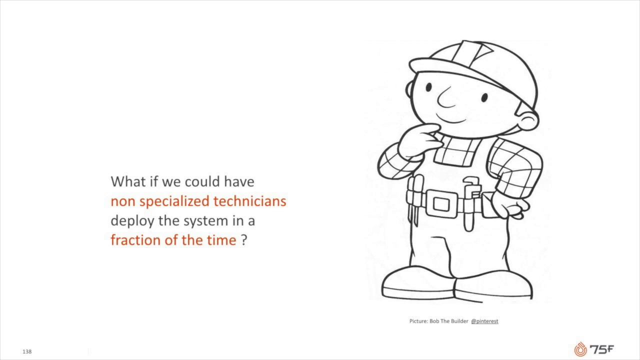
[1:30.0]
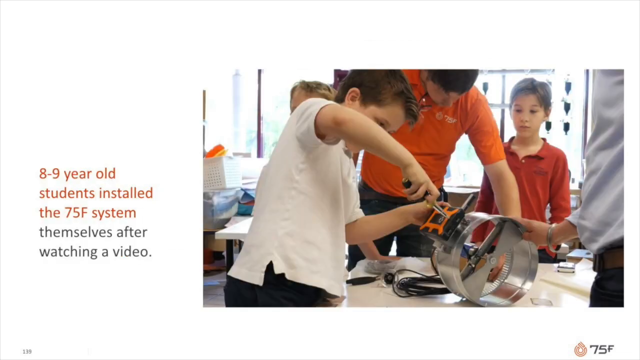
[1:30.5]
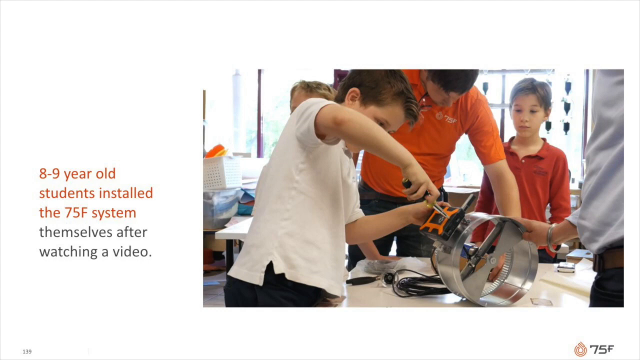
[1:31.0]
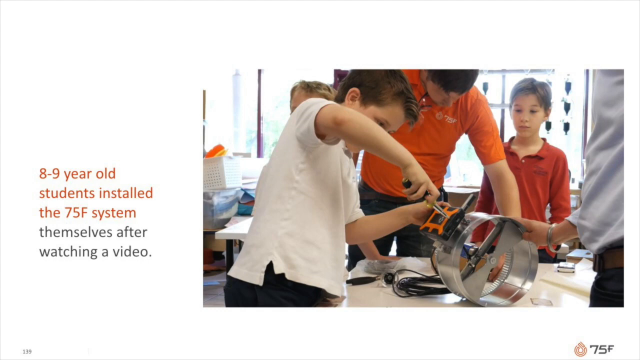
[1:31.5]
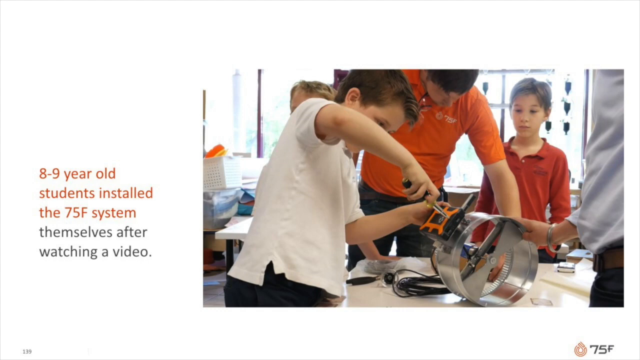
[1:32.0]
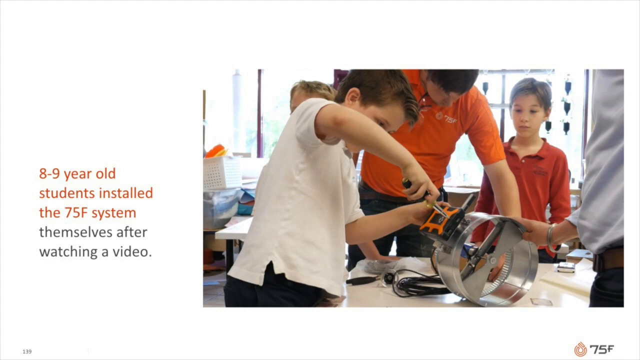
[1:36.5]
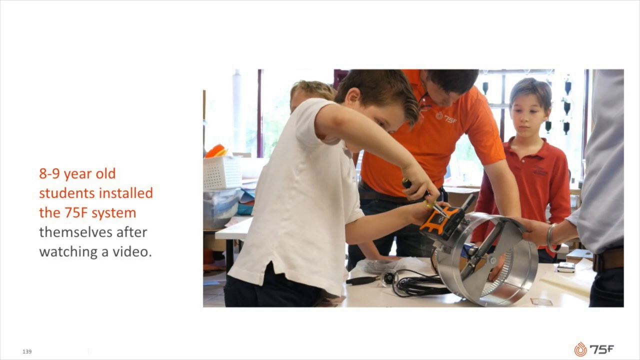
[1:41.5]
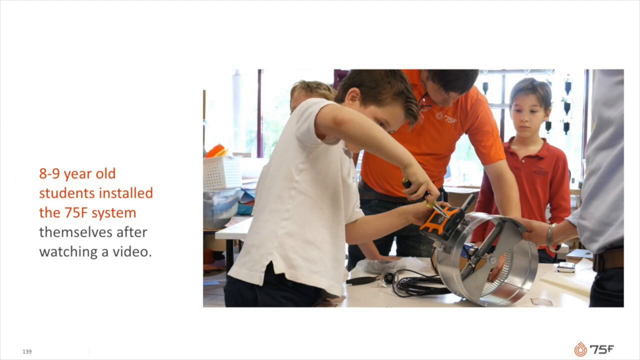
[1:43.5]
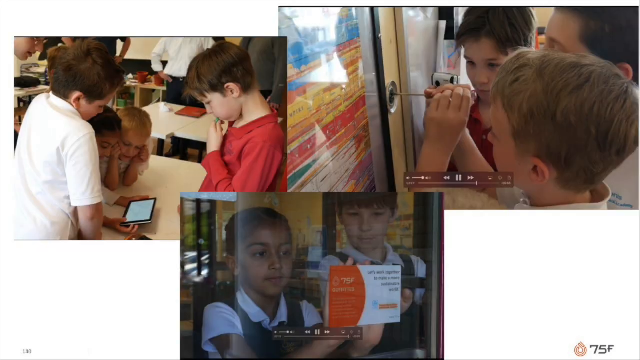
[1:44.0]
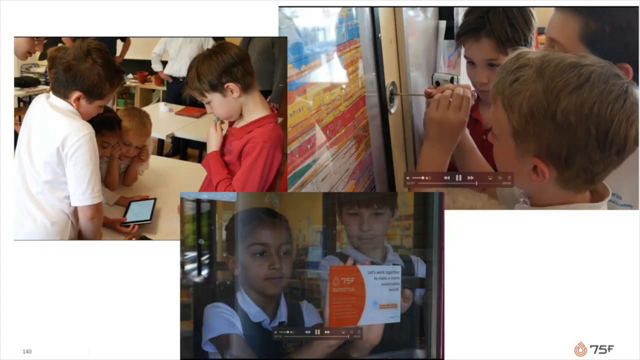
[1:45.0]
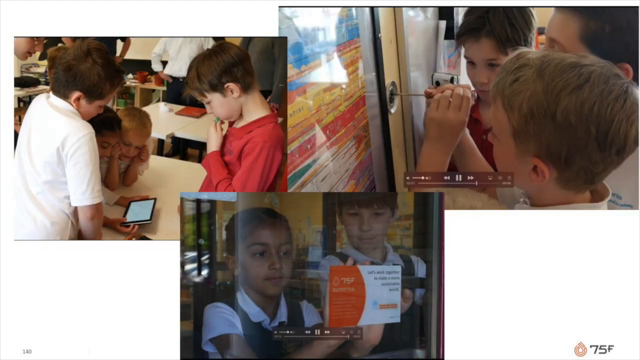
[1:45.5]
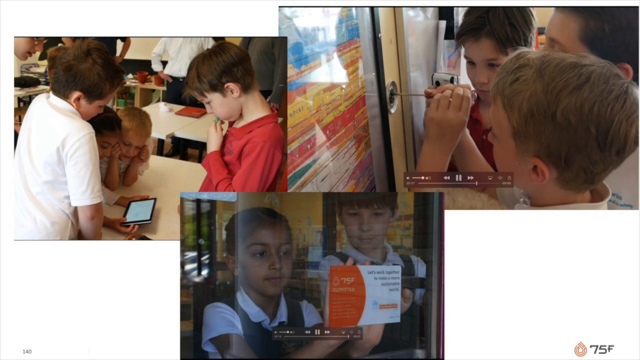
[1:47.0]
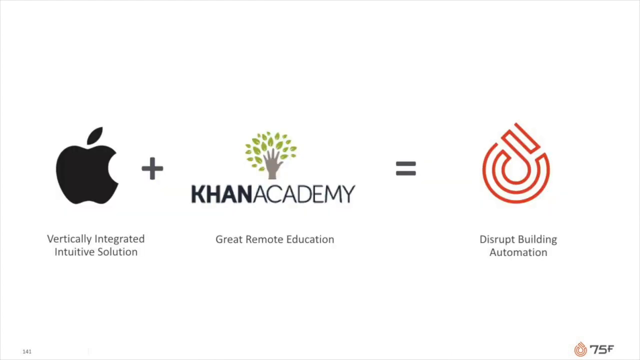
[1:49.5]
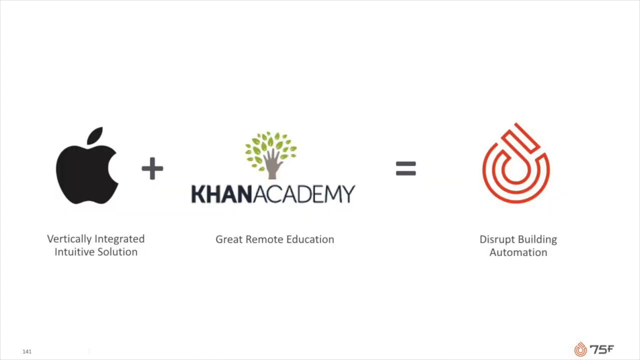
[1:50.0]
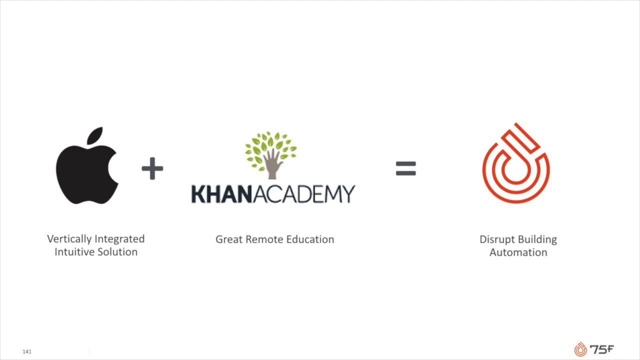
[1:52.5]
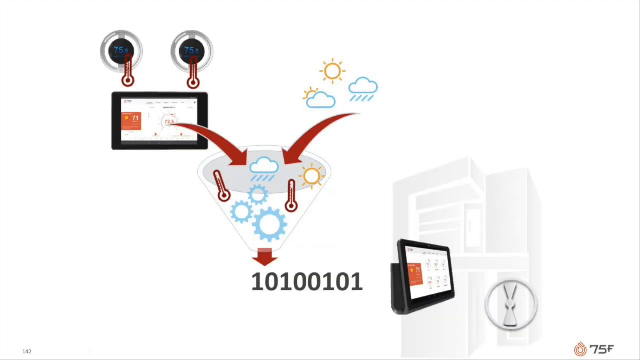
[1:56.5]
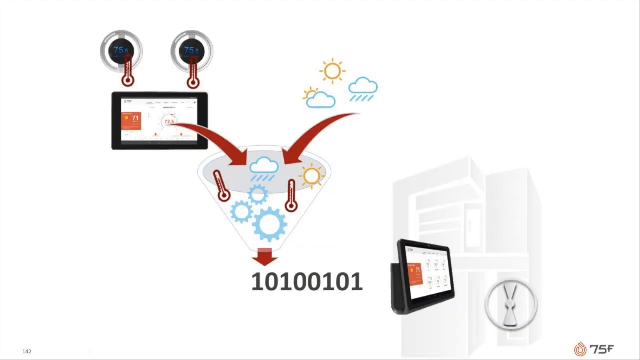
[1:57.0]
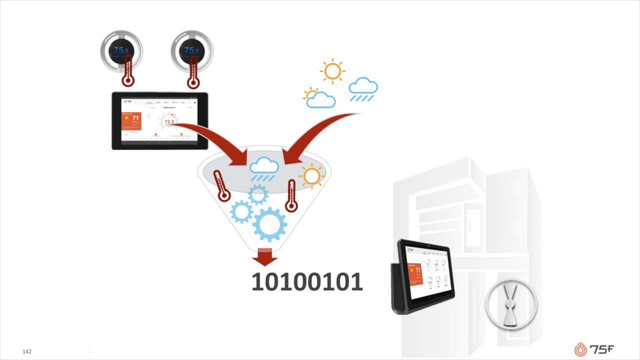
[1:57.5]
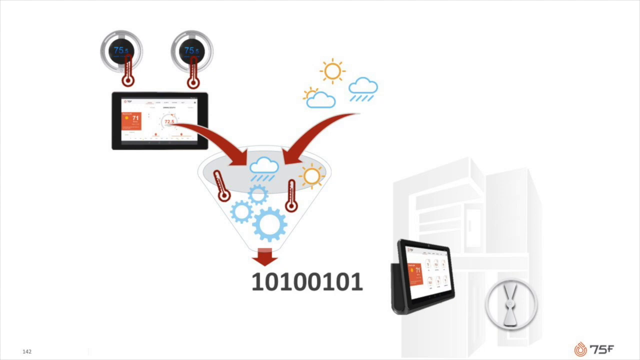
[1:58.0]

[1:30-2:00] The image shows the cartoon character Bob the Builder in black and white outline, touching his chin thoughtfully with his right hand, next to text reading "What if we could have non-specialised technicians deploy the system in a fraction of the time?" The screen switches to an image of a child working on a device with what appears to be a screwdriver or set of pliers, with text to the left reading "8-9 year old students installed system themselves after watching a video". Next is a collage of three pictures of young children: in the first, children stand around a tablet computer looking at the screen; in the second, a child uses a screwdriver to screw something into the wall while another child holds up a phone to take a picture or record; in the third, two children stand at a window sticking a piece of paper to the glass. The next image shows three logos in a mathematical equation: the Apple computer logo with "vertically integrated intuitive solution" below it, a plus sign, the Khan Academy logo with "great remote education" written below it, then an equal sign and another logo with "disrupt building automation" written under it.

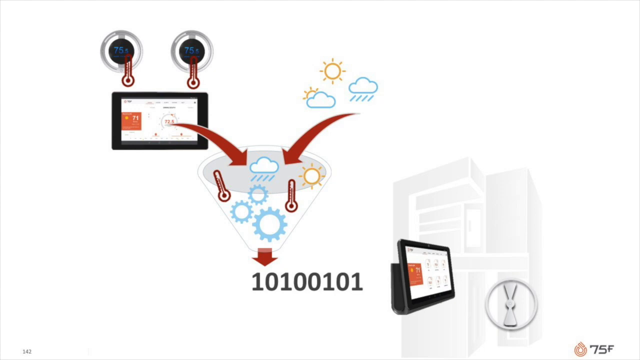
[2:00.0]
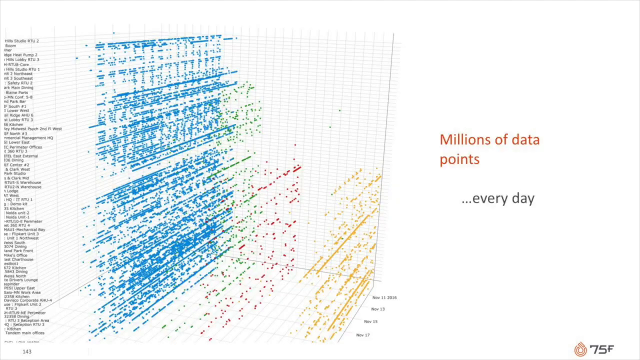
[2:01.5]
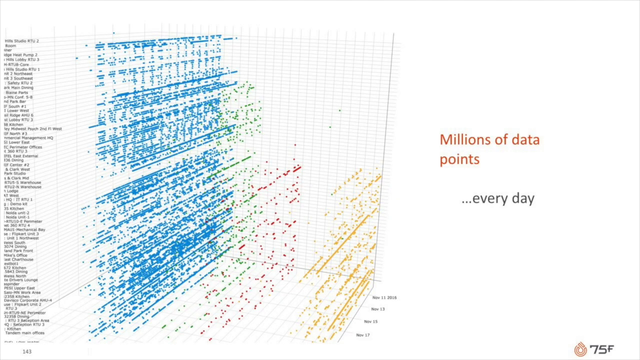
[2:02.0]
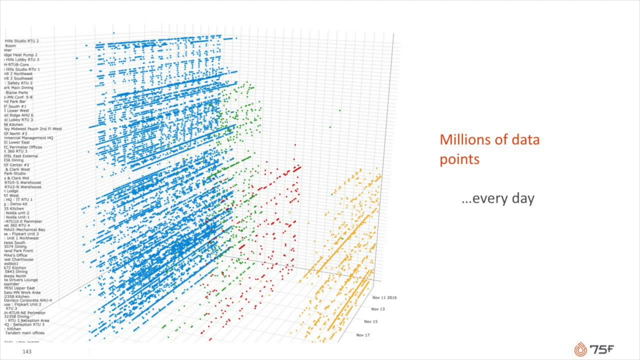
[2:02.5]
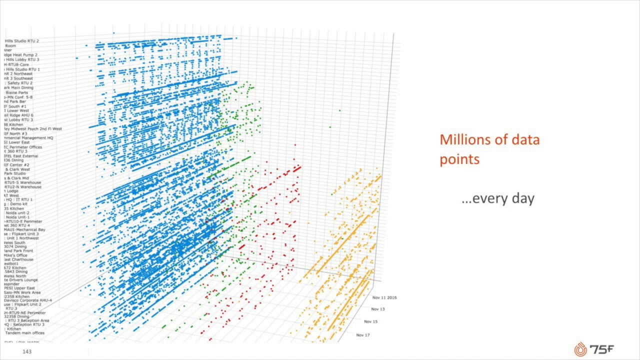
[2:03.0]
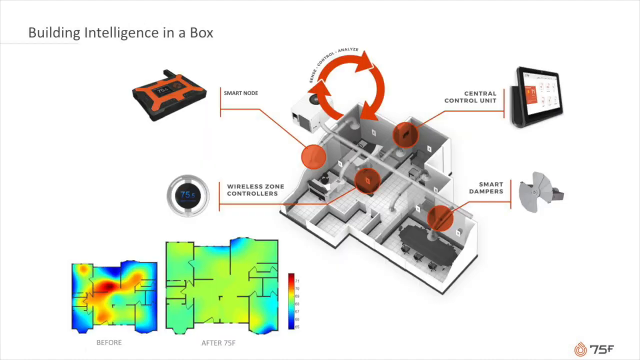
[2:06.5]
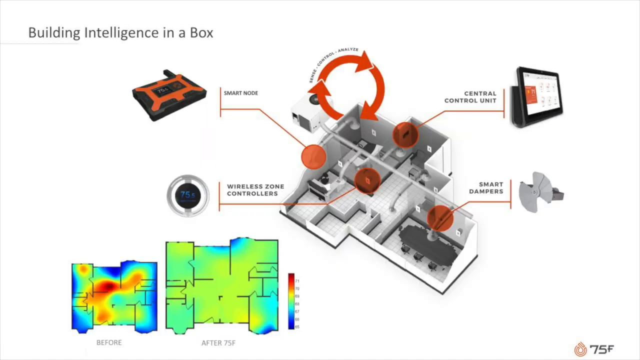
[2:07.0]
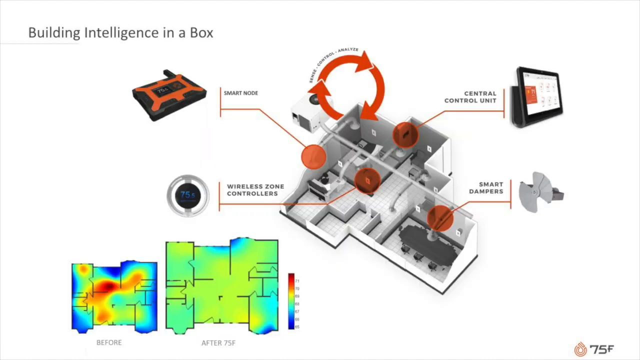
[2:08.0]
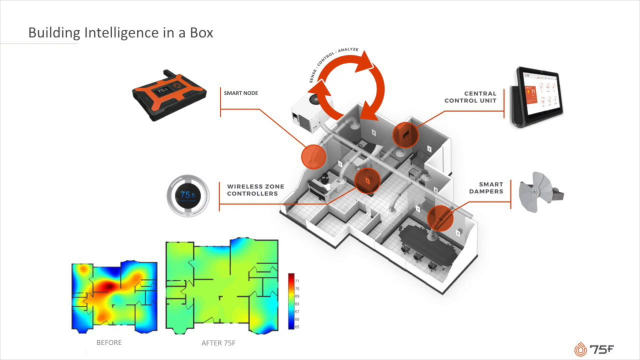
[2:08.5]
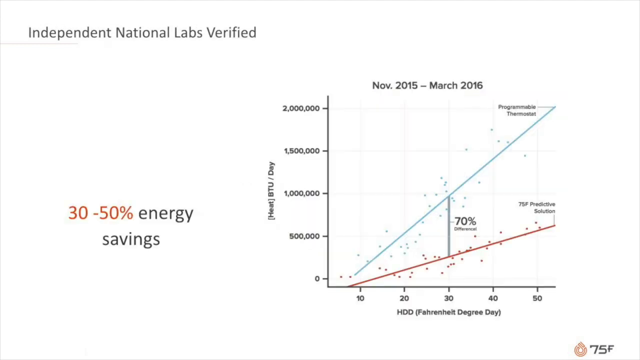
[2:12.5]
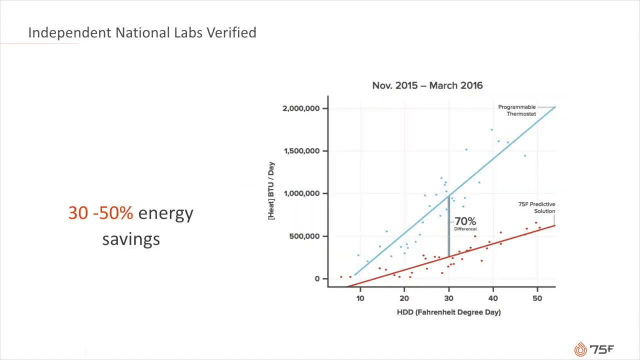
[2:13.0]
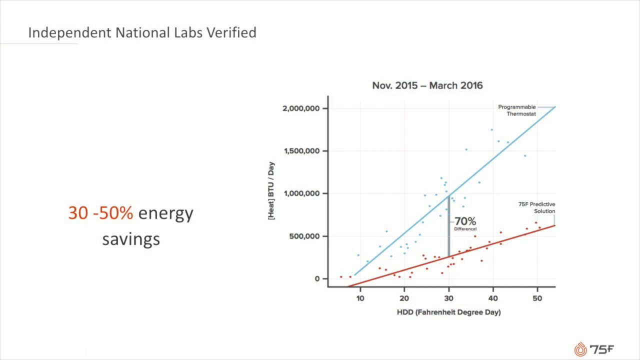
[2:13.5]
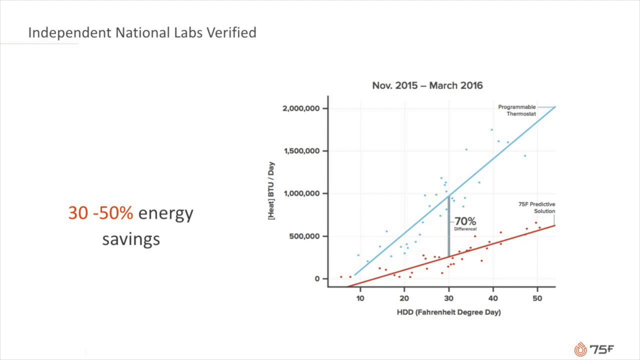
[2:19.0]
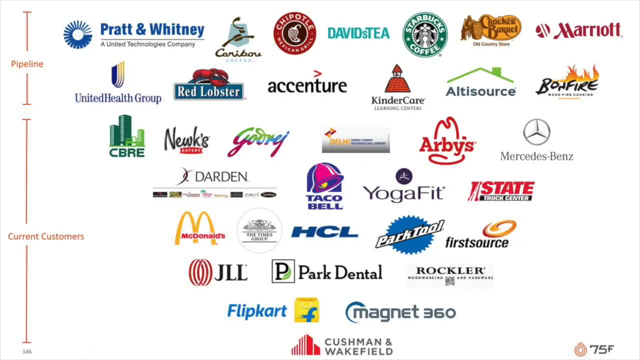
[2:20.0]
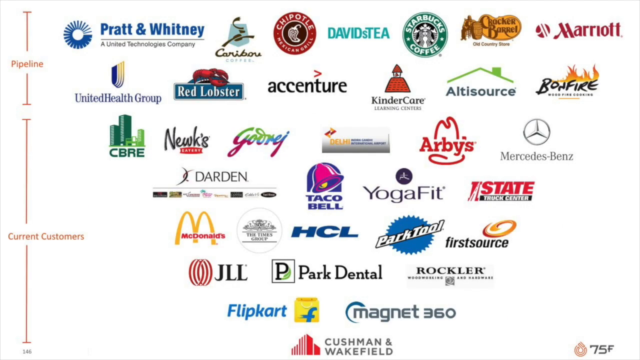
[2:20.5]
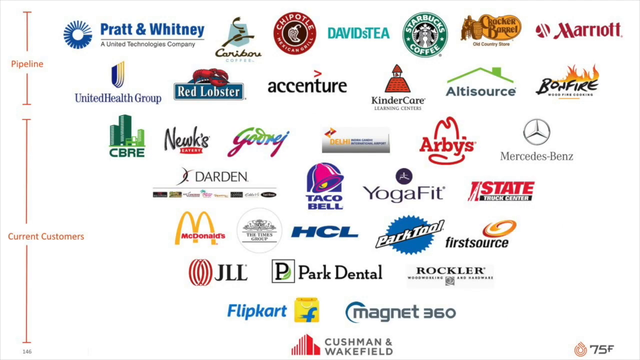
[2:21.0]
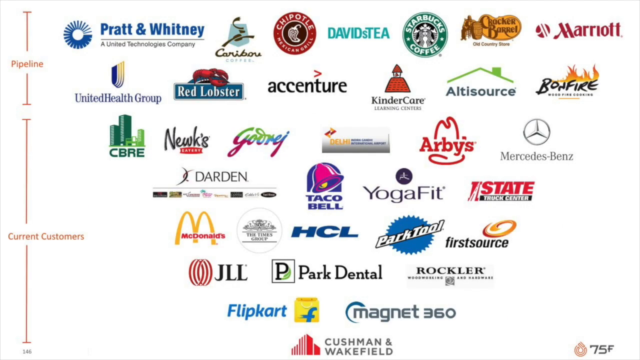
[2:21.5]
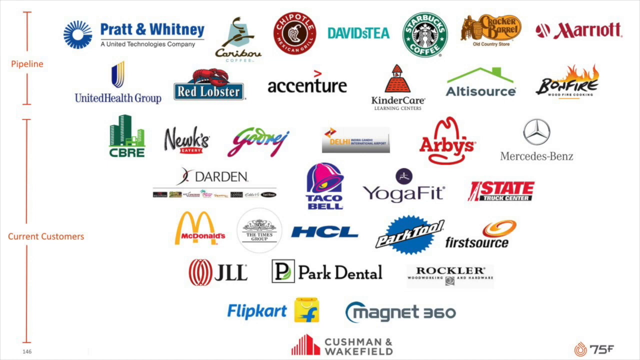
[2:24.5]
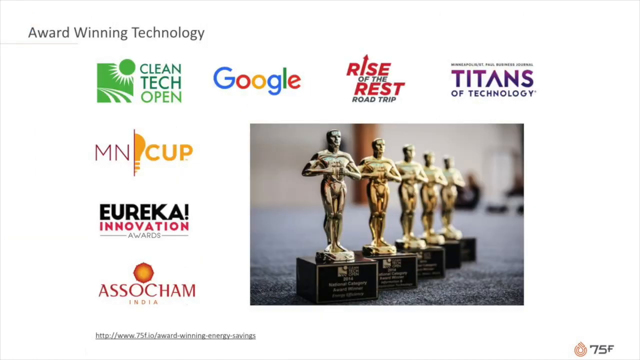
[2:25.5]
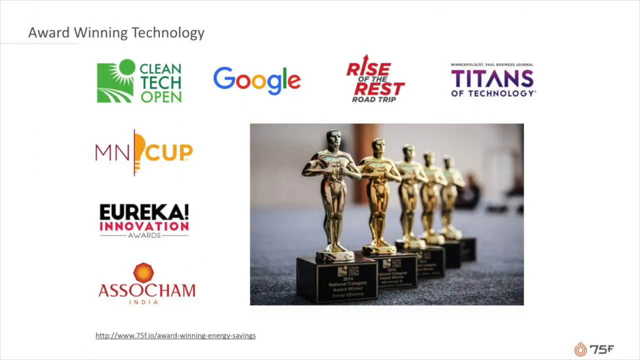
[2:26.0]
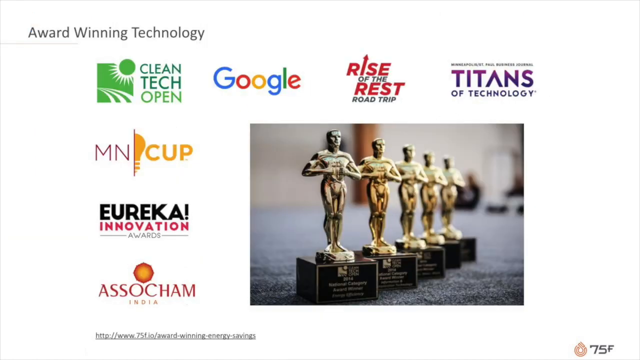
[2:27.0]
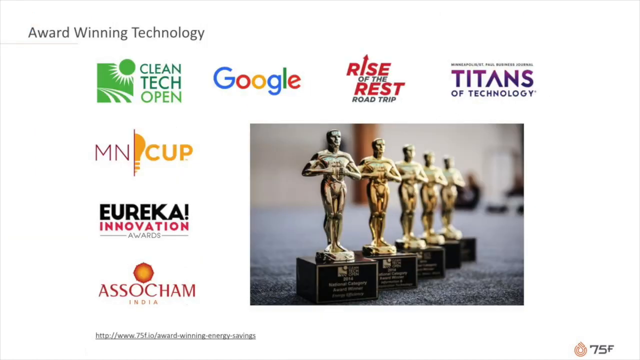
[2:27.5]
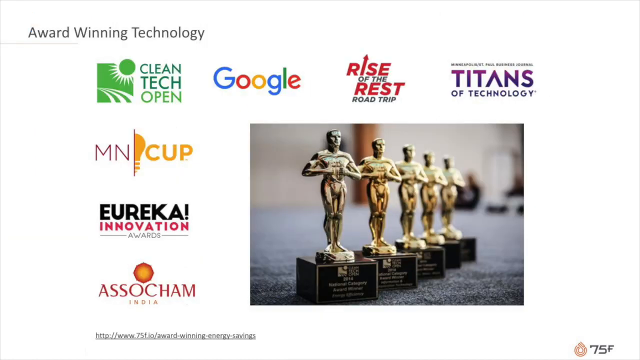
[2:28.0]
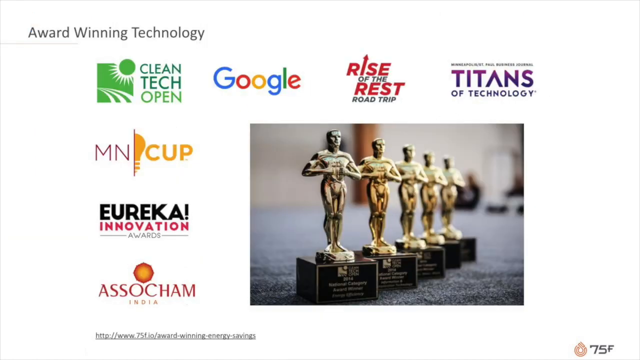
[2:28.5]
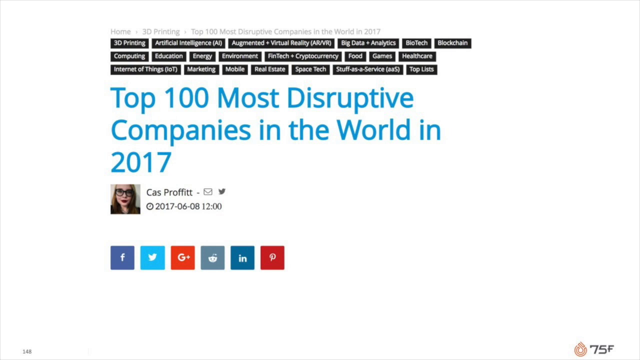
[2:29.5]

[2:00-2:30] A stylized process diagram shows two inputs into a funnel: a computer tablet screen with what appear to be digital thermostats above it, and icons and logos representing weather. Arrows point down into a funnel containing stylized thermometers, weather icons and cogs, and an output arrow leaves the bottom of the funnel with ones and zeros representing binary code and images of computing devices. The screen switches to a three-dimensional scatterplot with various layered axes of data, with text to the right reading "millions of data points every day". Text on the screen then reads "building intelligence in a box" beside a floor plan of a building with various hotspots, sensors and devices highlighted around it and a thermal heat map of the building. Next is a line chart imposed over a scatterplot with data from November 2015 to March 2016, with text next to it reading "Independent National Labs verified 30-50% energy savings". A page follows with a series of company logos, including Pratt & Whitney, Chipotle, Marriott Hotels, Starbucks Coffee, Mercedes-Benz and McDonald's, and then a page titled "Award-Winning Technology" with a list of award-winning companies.